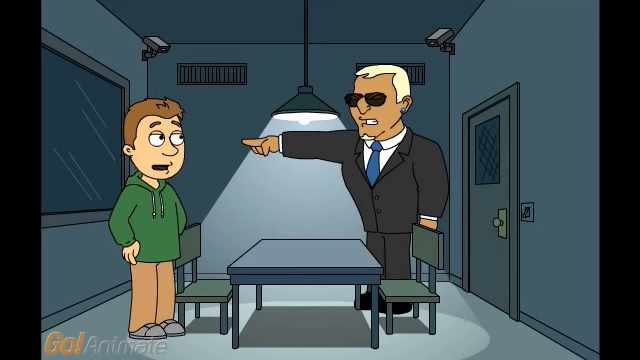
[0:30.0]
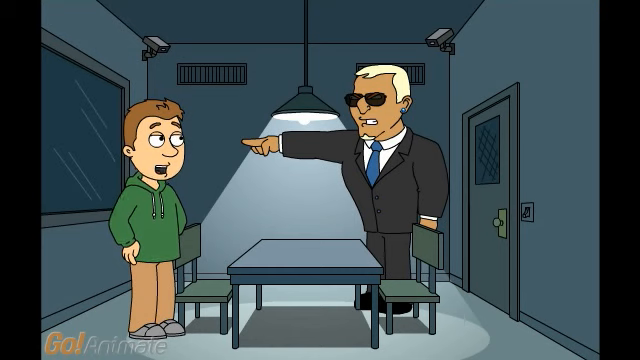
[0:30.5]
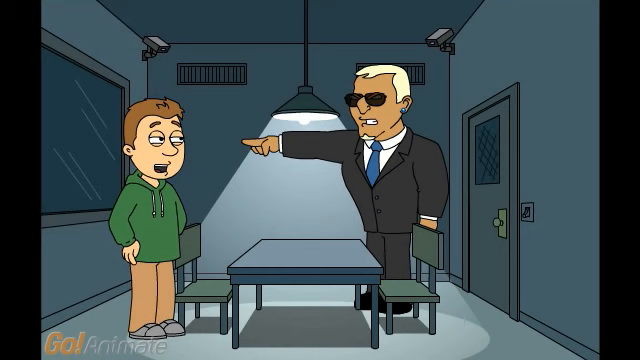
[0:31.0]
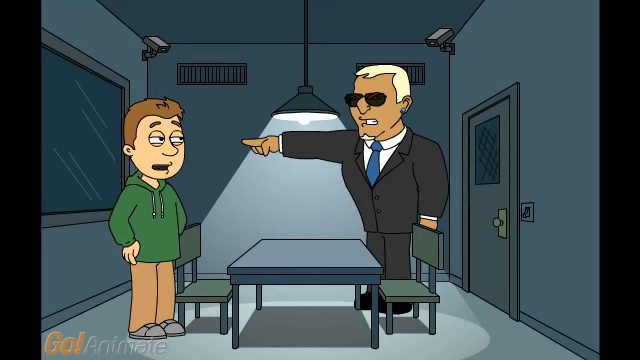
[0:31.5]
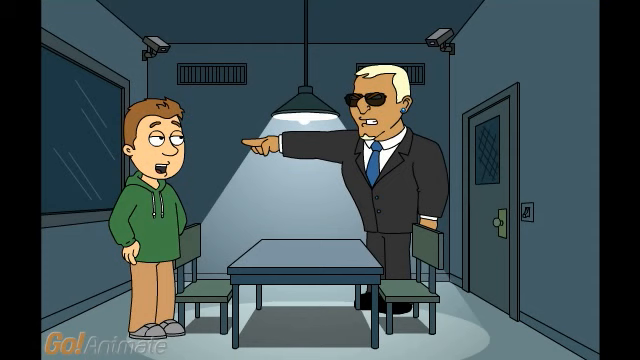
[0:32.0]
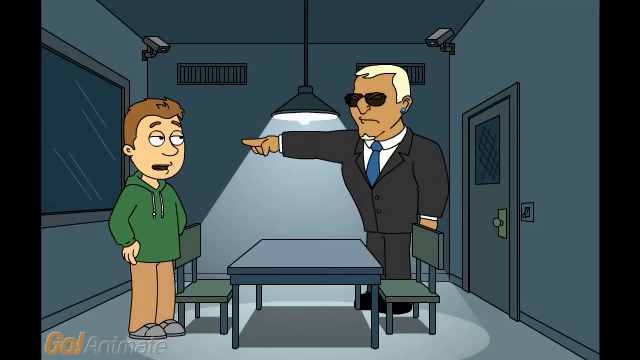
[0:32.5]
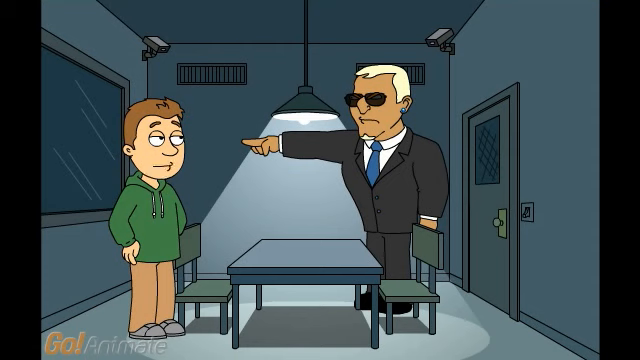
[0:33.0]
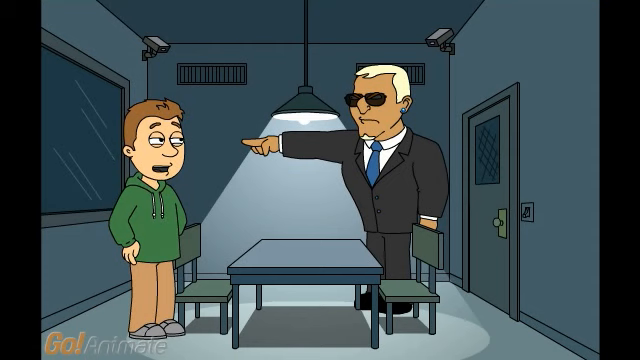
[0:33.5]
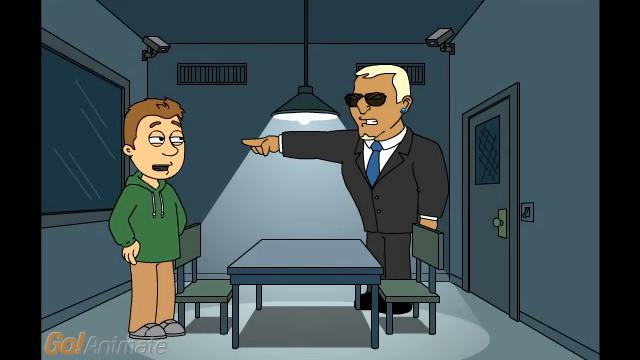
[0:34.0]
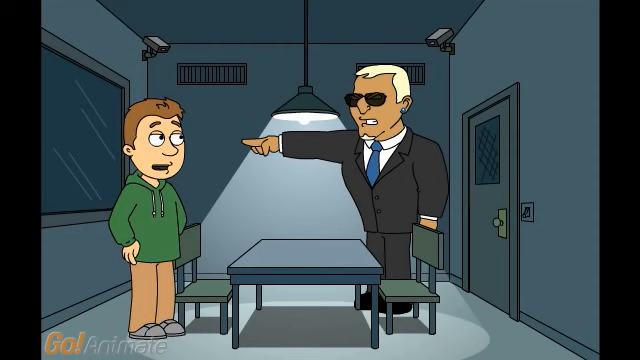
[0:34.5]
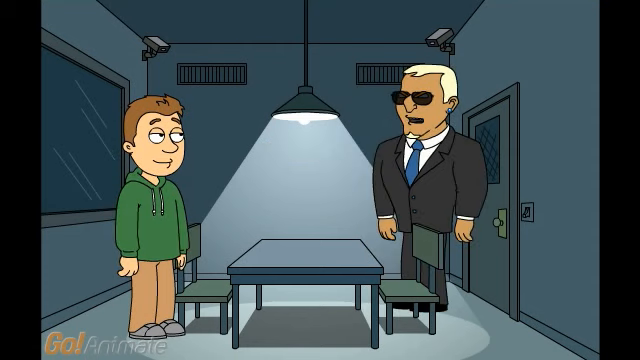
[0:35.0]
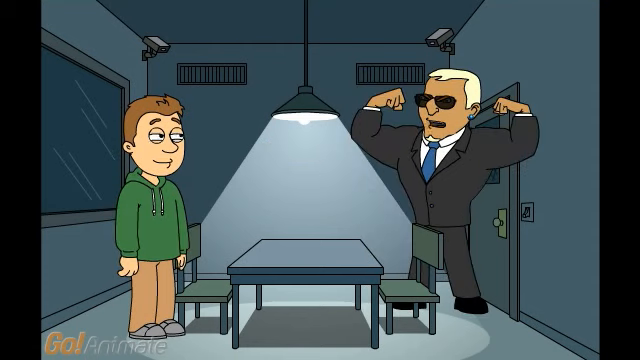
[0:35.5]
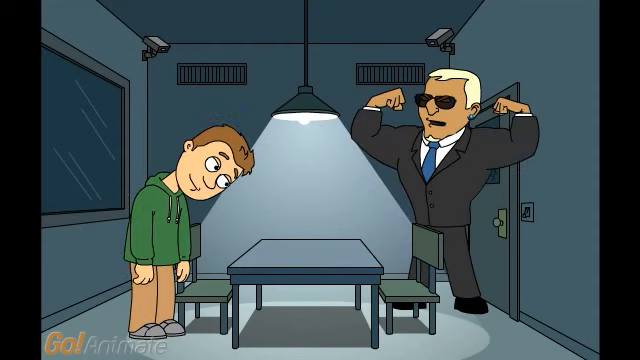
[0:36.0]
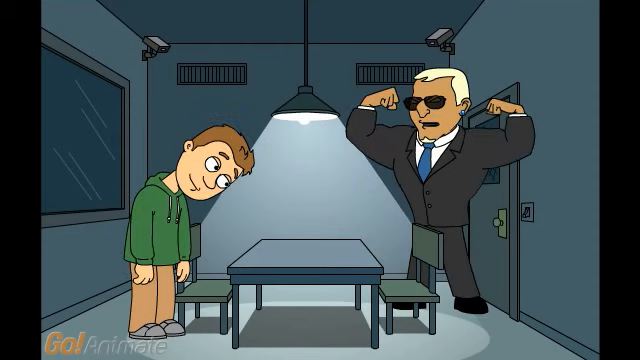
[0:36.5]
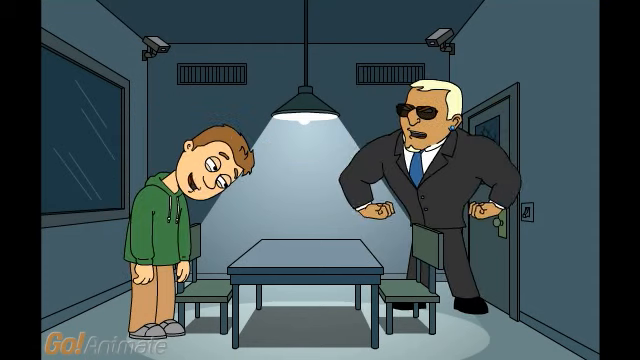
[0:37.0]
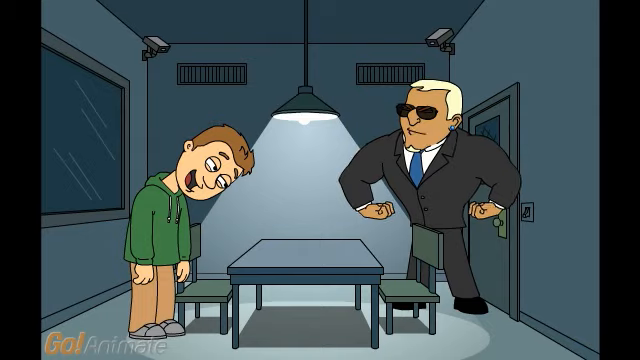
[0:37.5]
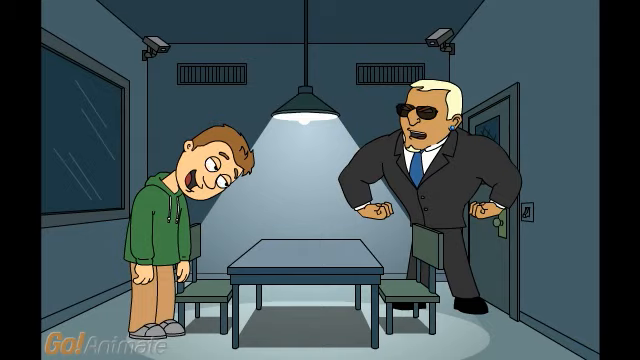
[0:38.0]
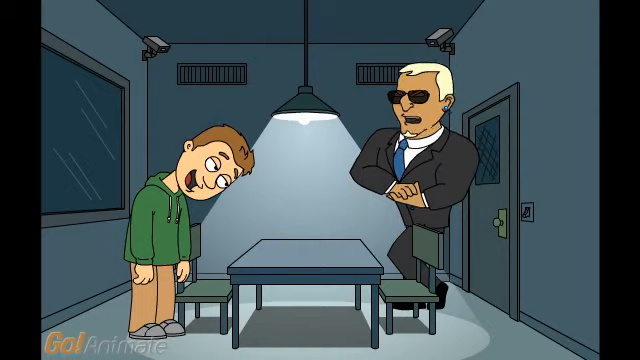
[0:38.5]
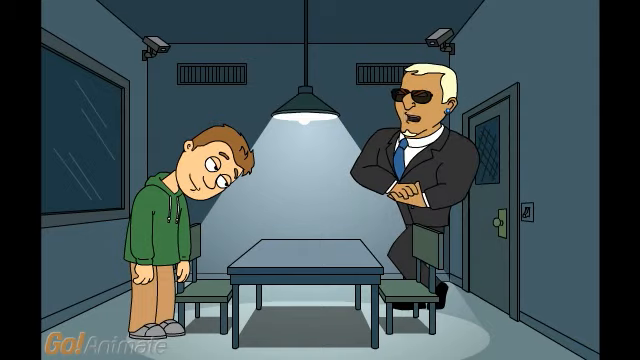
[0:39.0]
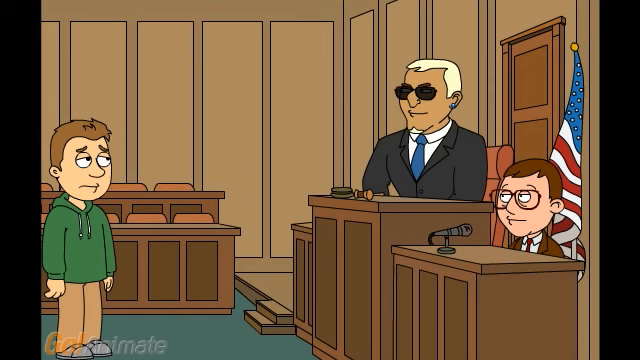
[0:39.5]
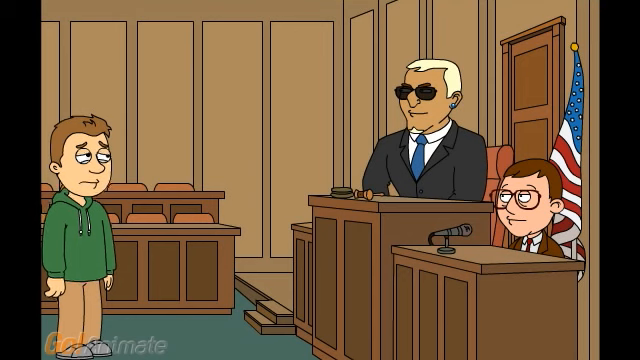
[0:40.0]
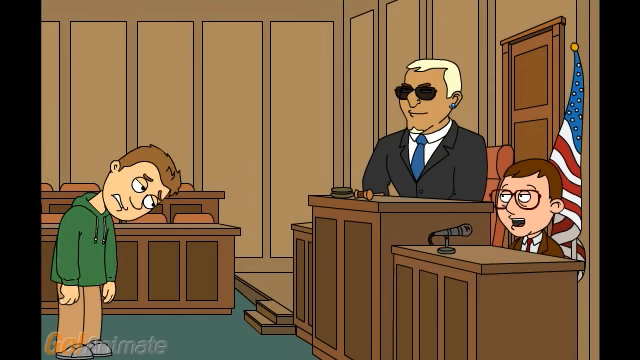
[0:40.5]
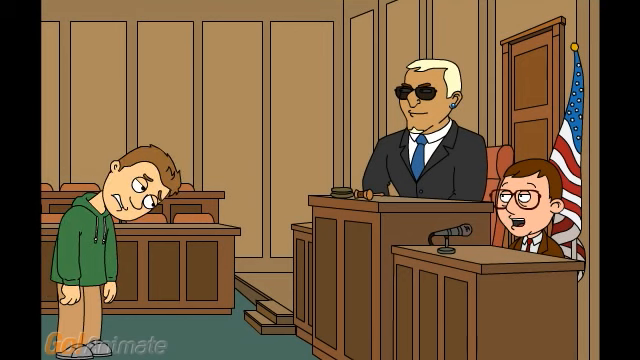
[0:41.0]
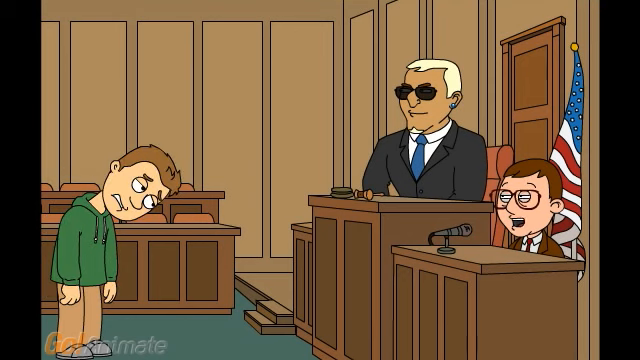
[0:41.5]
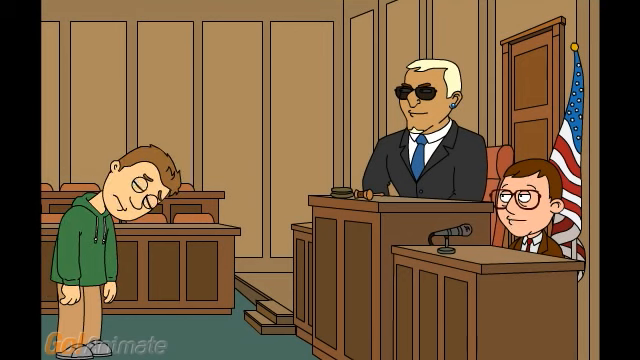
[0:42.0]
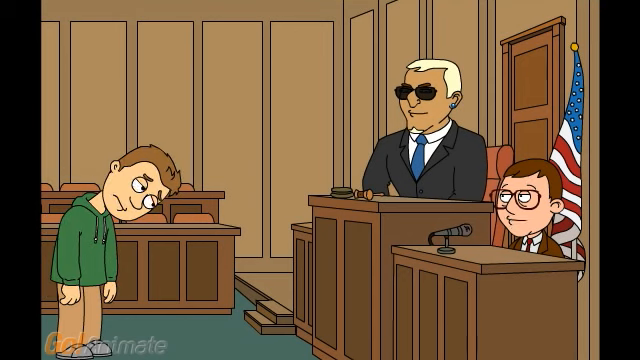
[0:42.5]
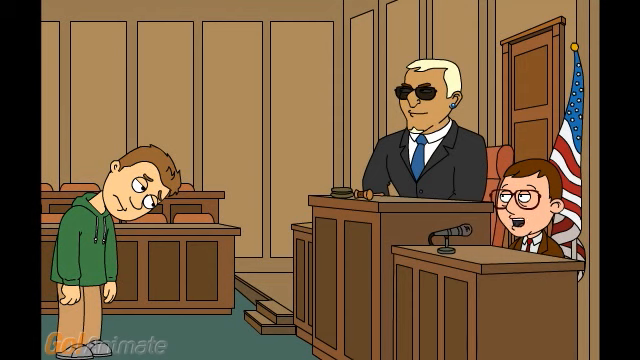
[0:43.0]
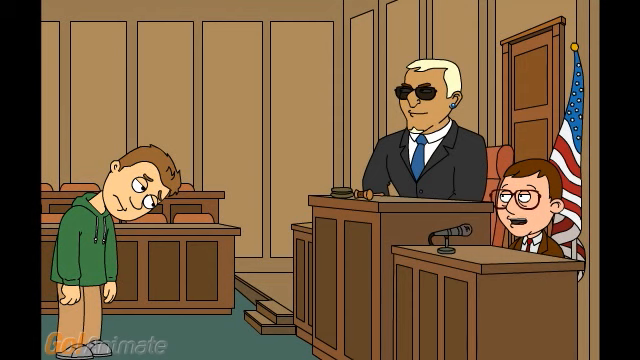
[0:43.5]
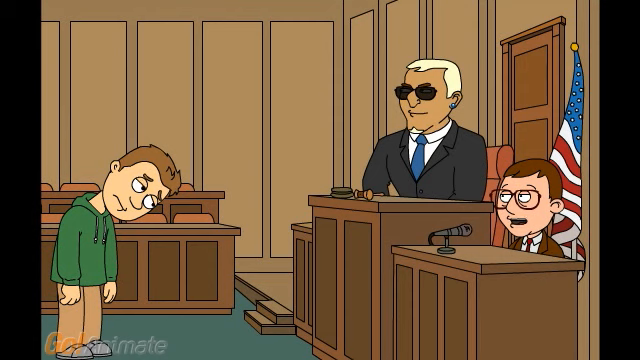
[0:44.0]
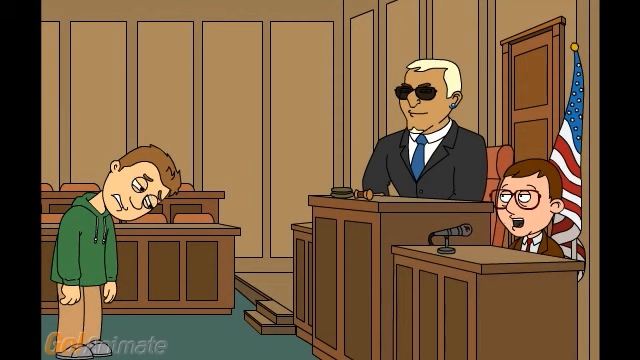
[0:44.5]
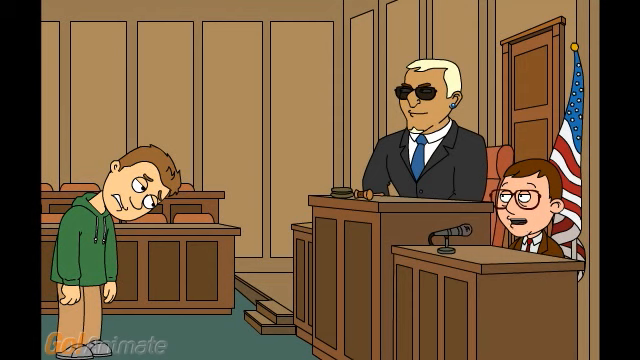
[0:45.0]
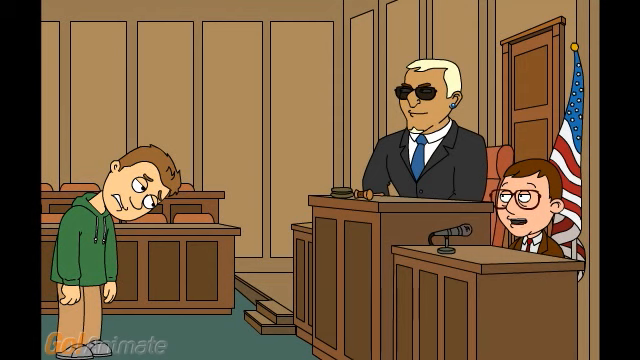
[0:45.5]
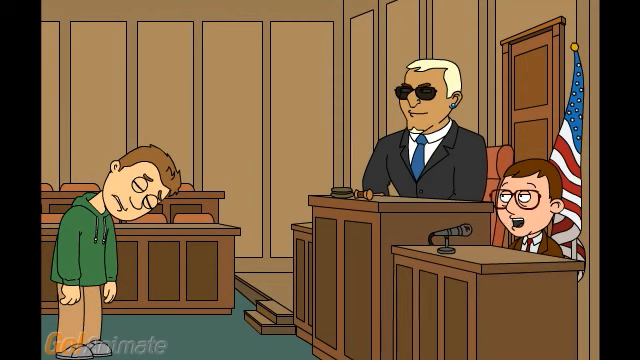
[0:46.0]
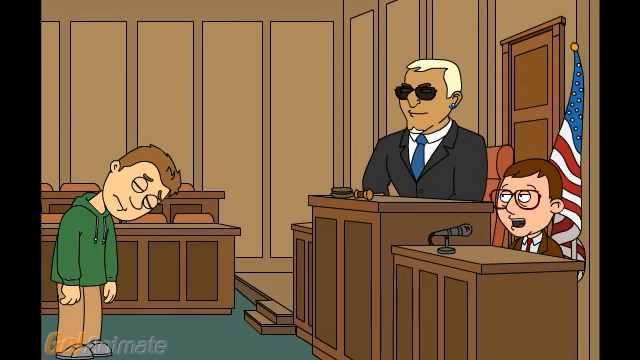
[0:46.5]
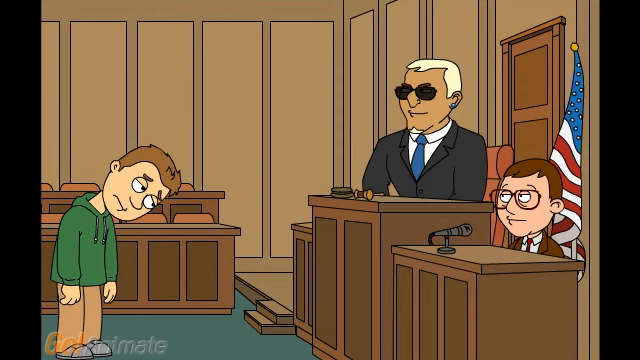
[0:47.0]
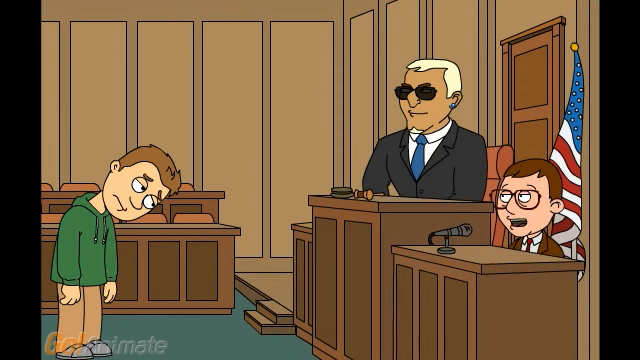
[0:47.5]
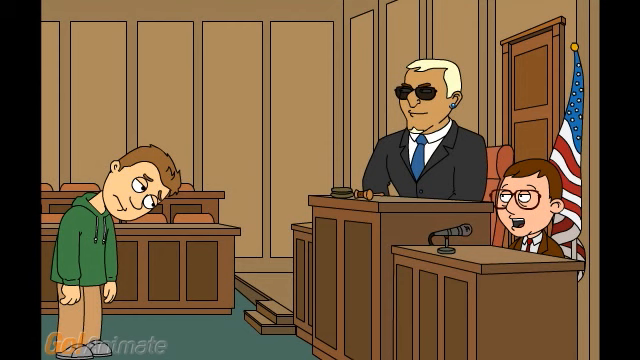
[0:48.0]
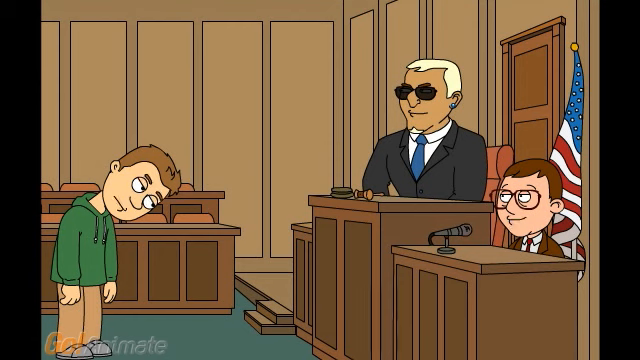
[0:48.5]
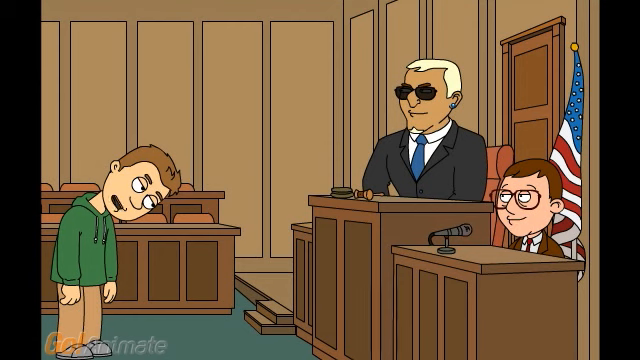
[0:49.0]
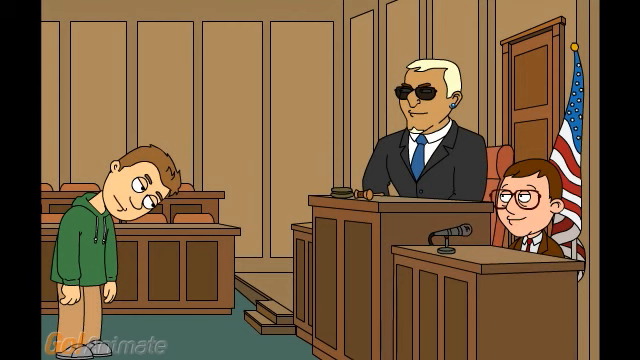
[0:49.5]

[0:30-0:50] The scene is a court of law with an American flag. A judge appears to be passing a judgement on the boy, who seems very frustrated and down-spirited, having been brought before the court.